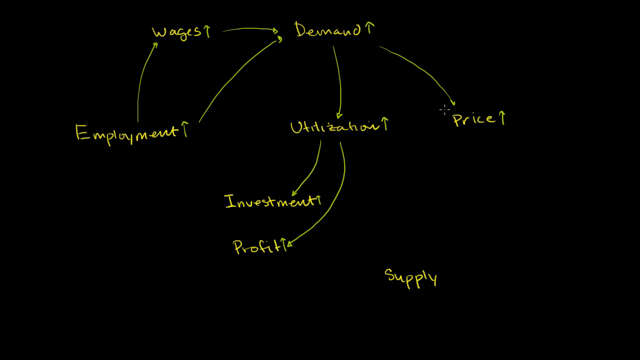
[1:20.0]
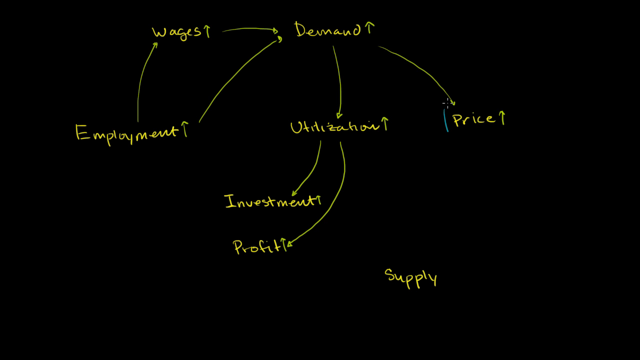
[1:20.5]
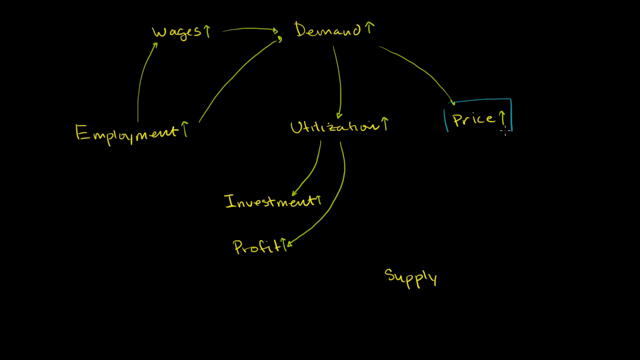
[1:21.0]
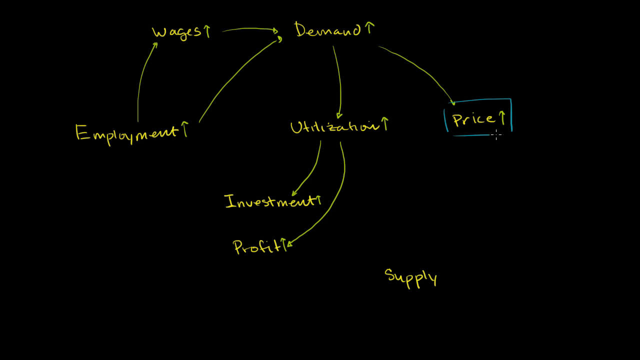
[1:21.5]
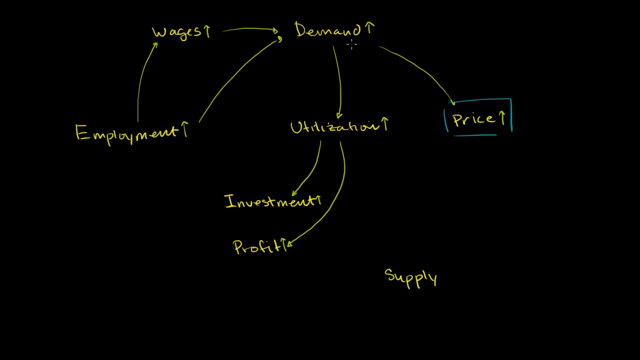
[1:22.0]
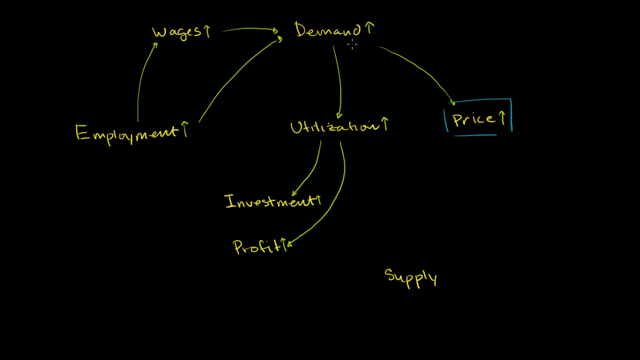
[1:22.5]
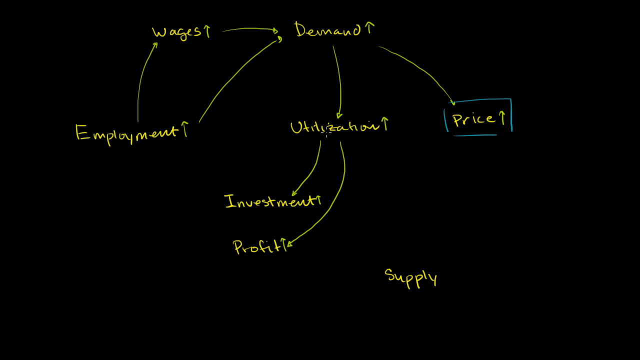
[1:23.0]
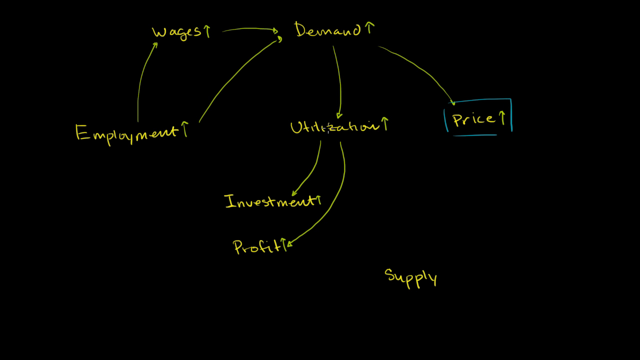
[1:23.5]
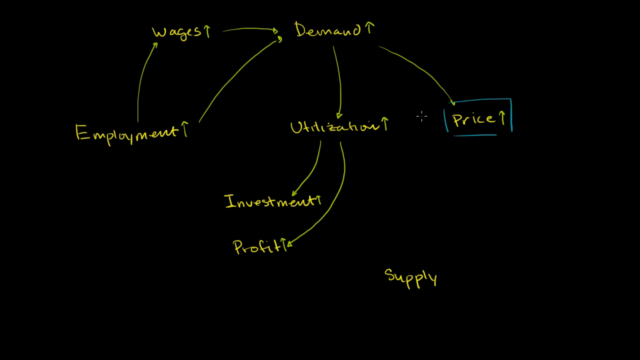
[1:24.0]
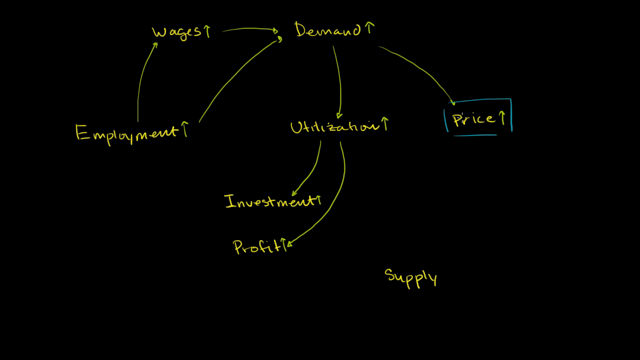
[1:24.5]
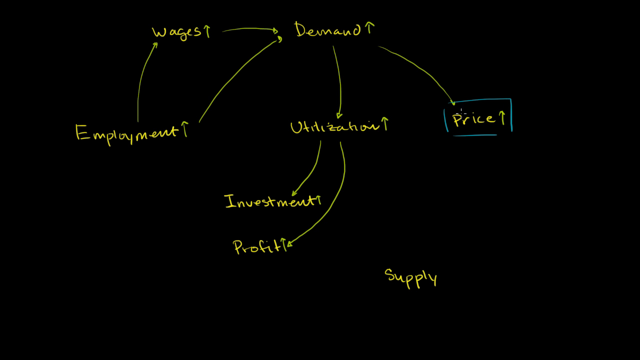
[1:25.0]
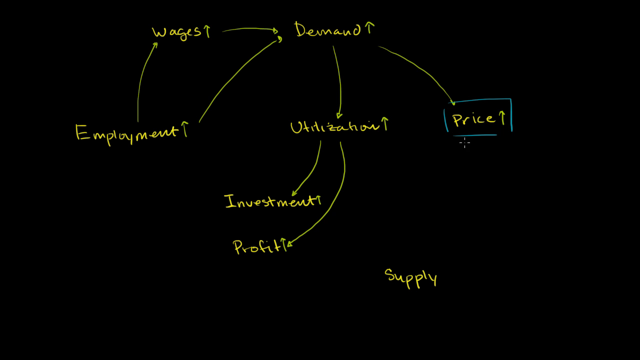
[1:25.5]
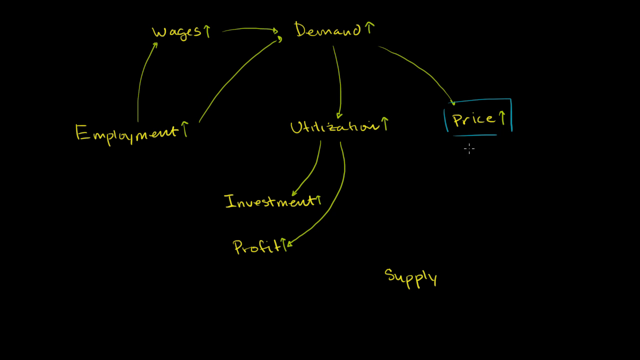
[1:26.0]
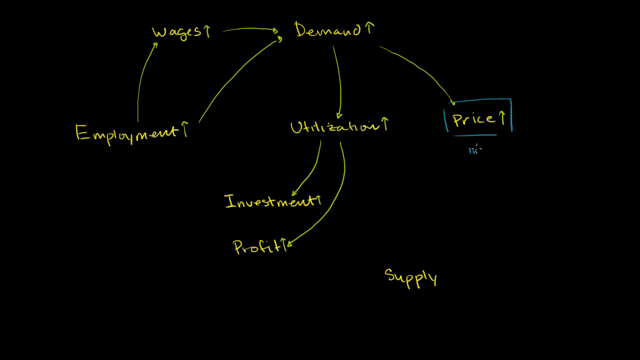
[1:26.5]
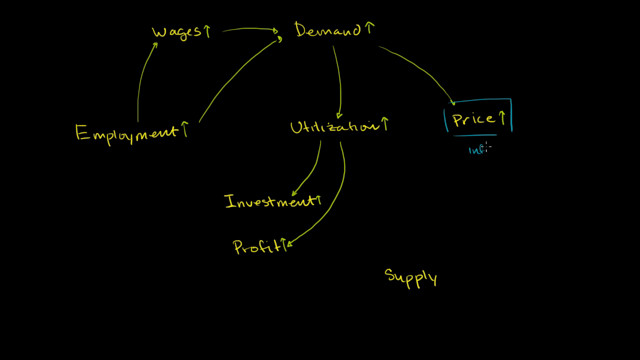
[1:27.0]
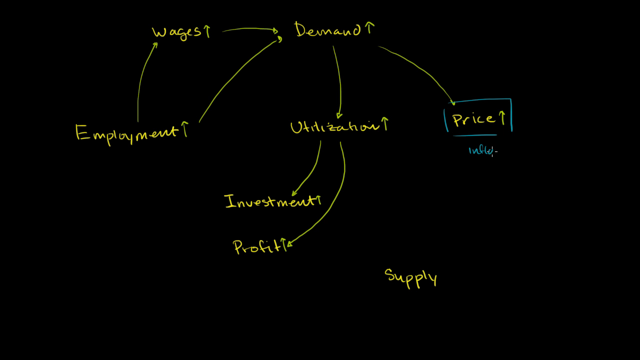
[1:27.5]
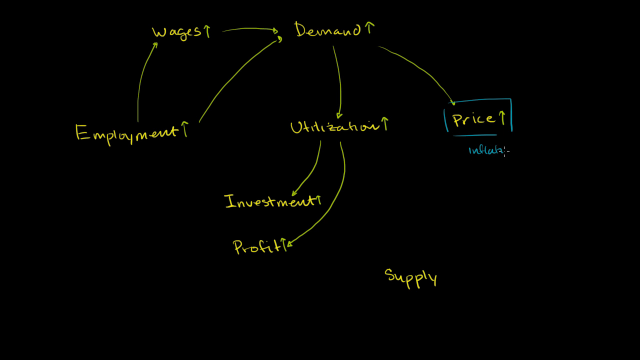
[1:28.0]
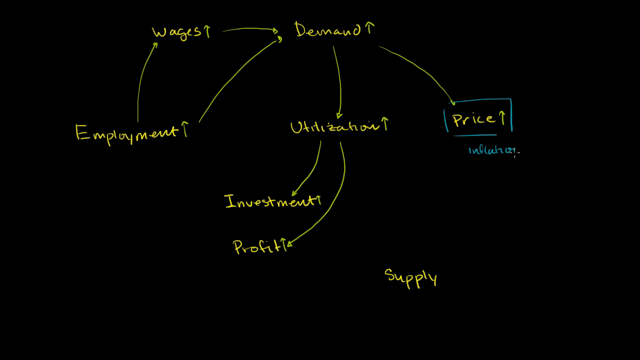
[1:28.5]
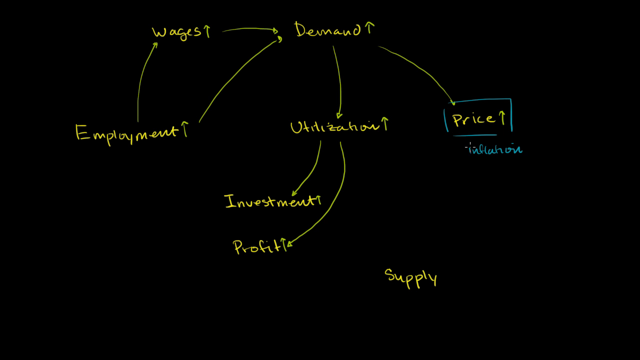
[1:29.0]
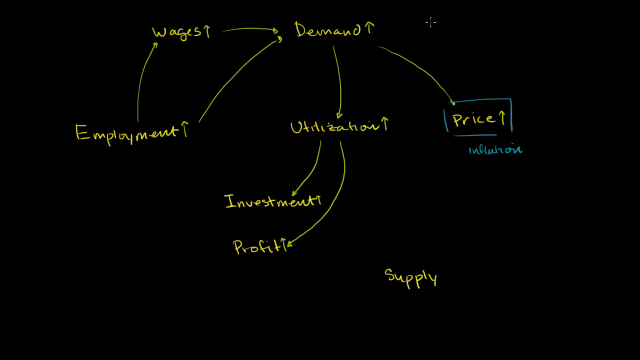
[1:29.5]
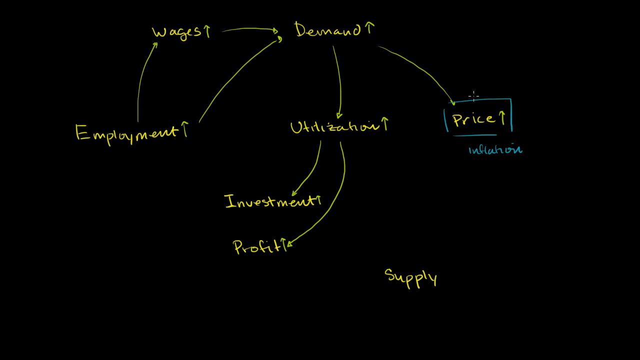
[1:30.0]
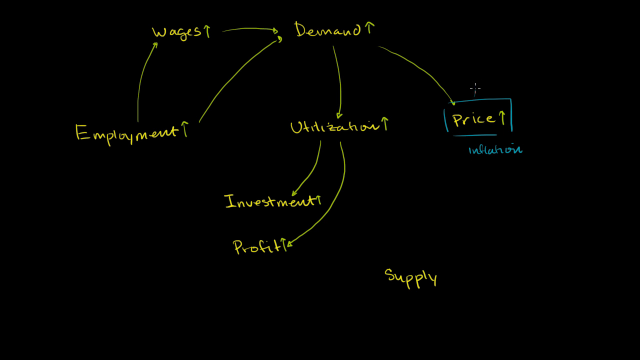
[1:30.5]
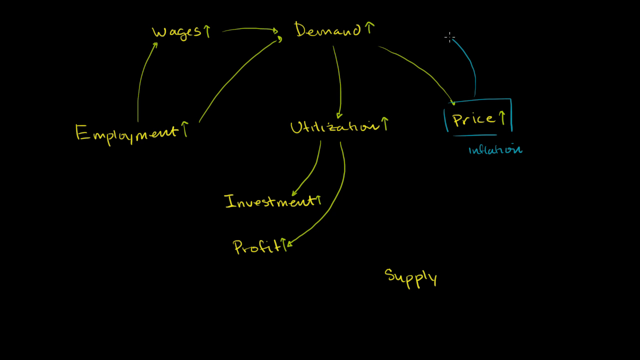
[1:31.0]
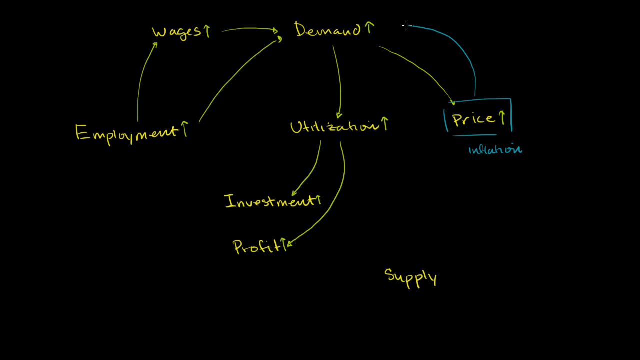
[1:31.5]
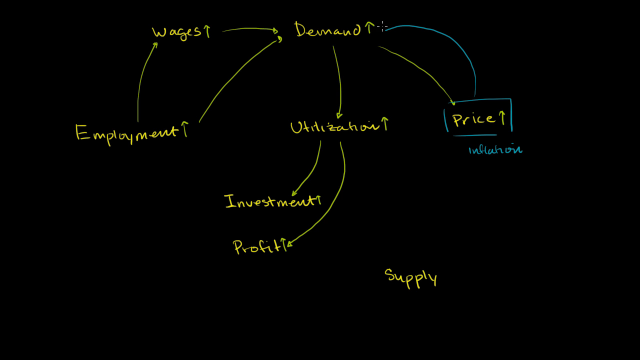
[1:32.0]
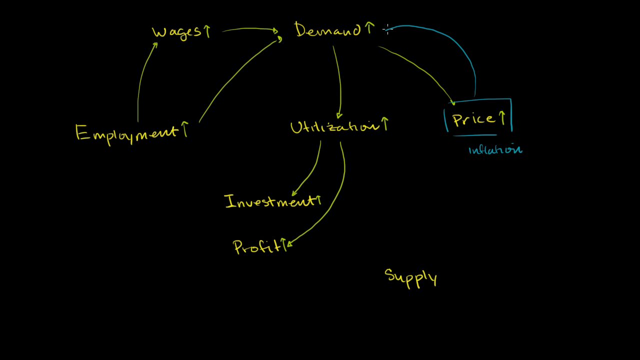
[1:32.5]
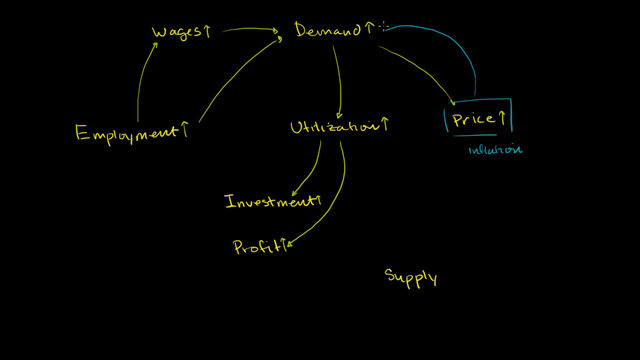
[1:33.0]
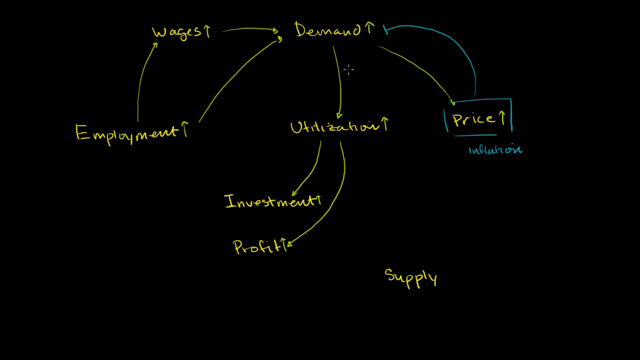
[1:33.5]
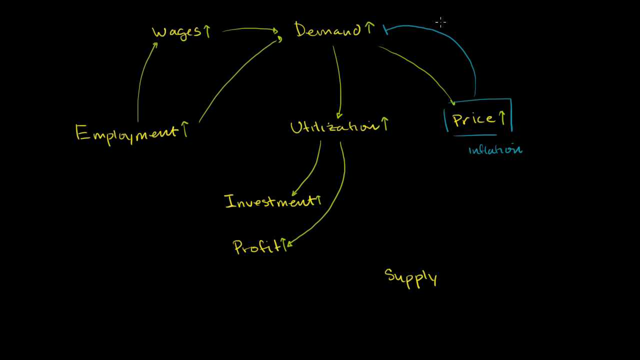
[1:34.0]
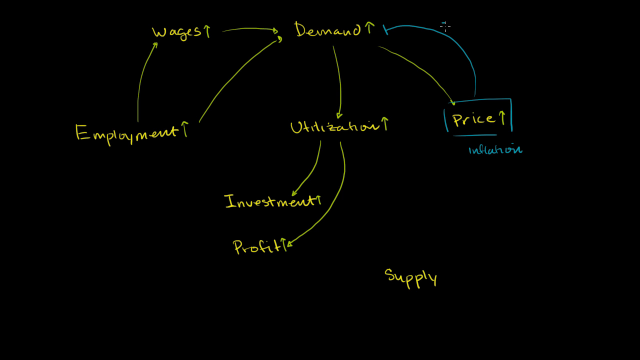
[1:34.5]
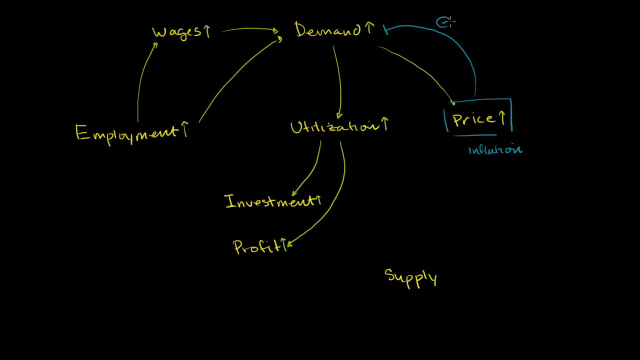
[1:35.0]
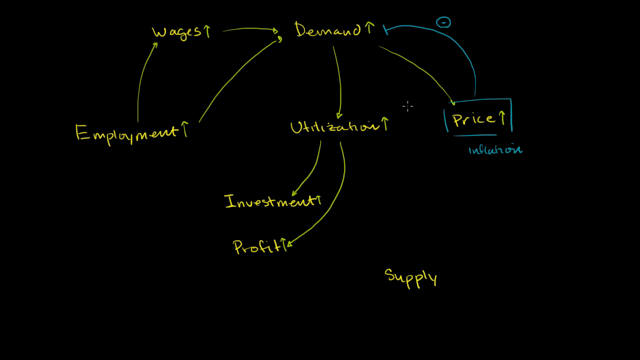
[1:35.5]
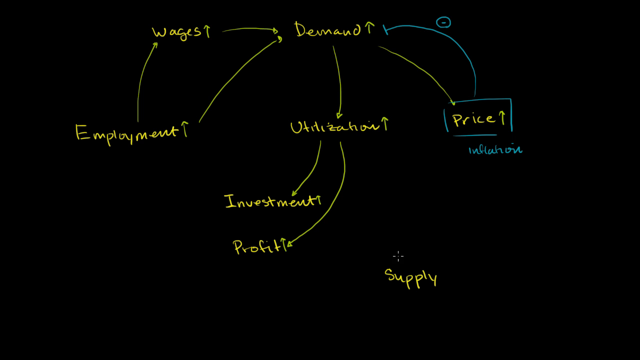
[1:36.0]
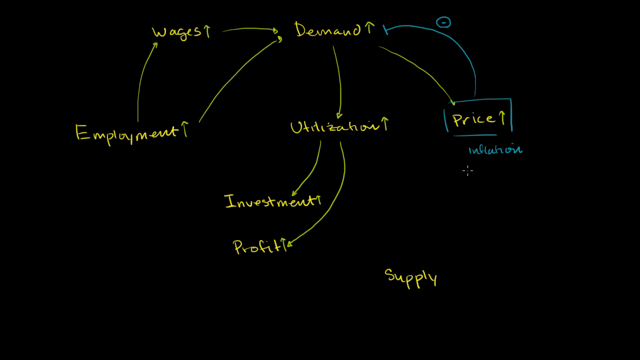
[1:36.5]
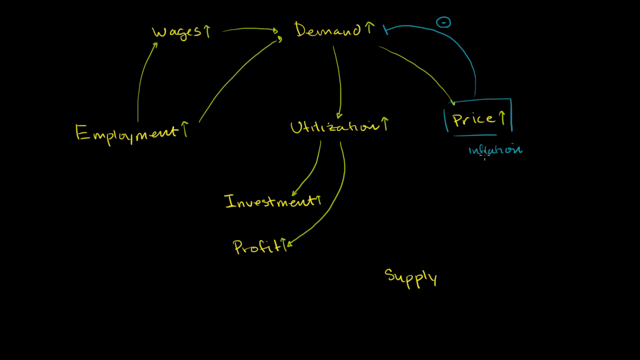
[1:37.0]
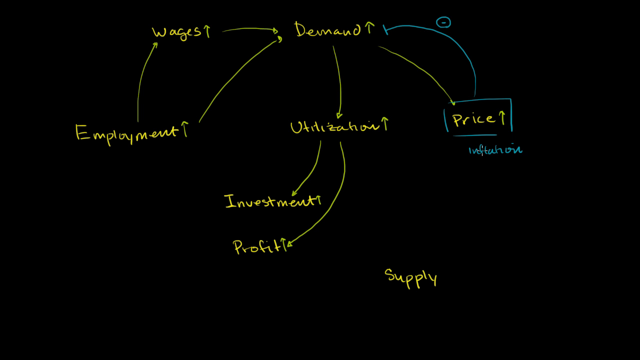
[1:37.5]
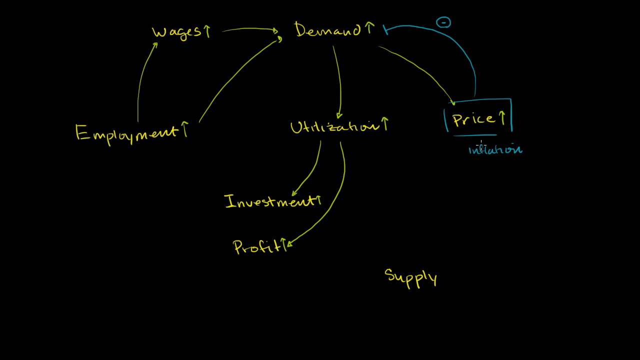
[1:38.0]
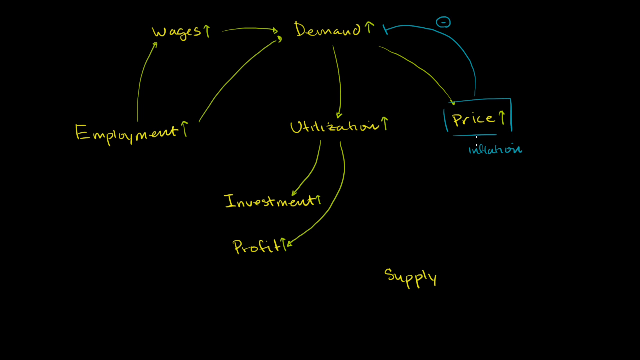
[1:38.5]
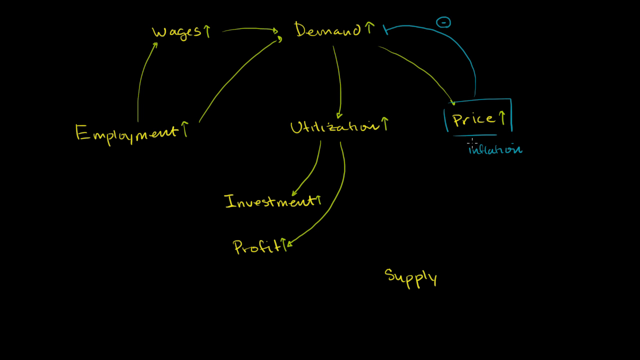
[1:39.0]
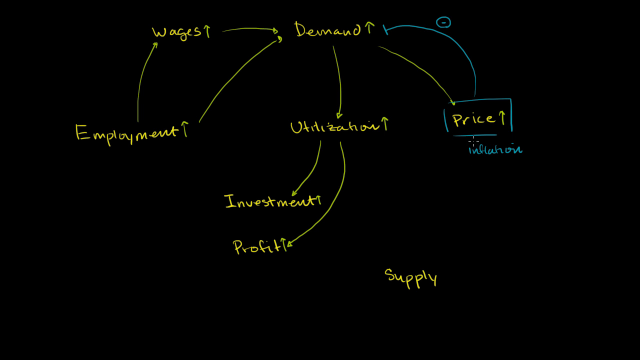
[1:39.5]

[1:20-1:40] A blue box is drawn around the word "Price," and directly below it the word "Inflation" is written in blue, unlike the yellow of the other words. A blue arrow goes from "Price" up to "Demand" with a circled negative sign. The rest is unchanged: "Wages" and "Demand" at the top, "Employment," "Utilization" and "Price" in the middle, "Investment" below, "Profit" below that, and "Supply" at the bottom right of the frame. "Employment" has arrows up to "Wages" and "Demand," "Wages" has an arrow to "Demand," "Demand" has arrows down to "Utilization," which has arrows down to "Investment" and "Profit," and "Demand" also has an arrow pointing down to "Price."